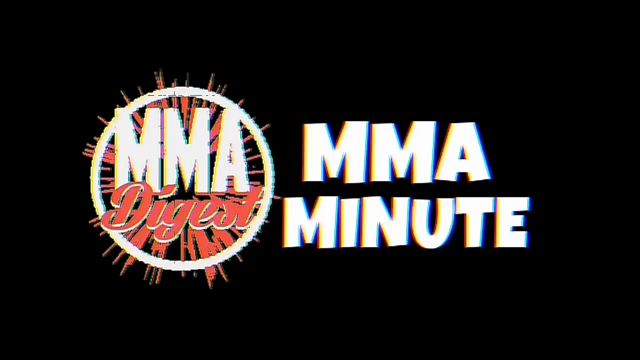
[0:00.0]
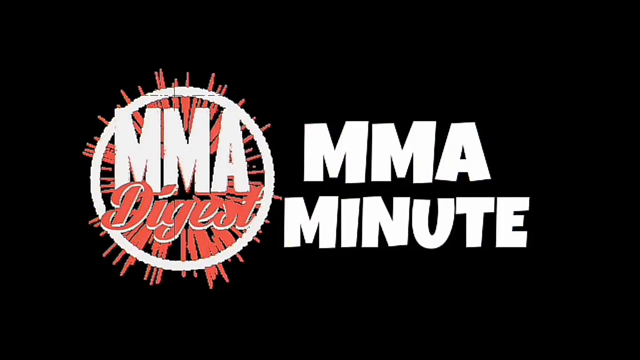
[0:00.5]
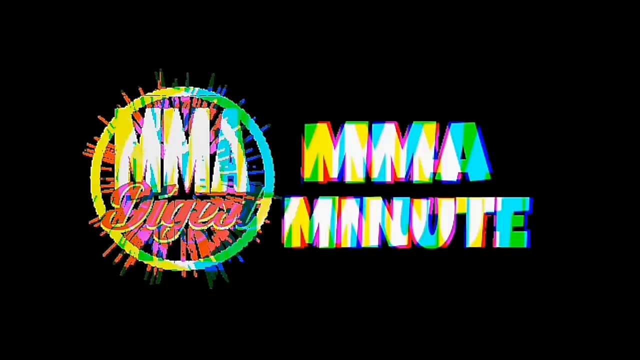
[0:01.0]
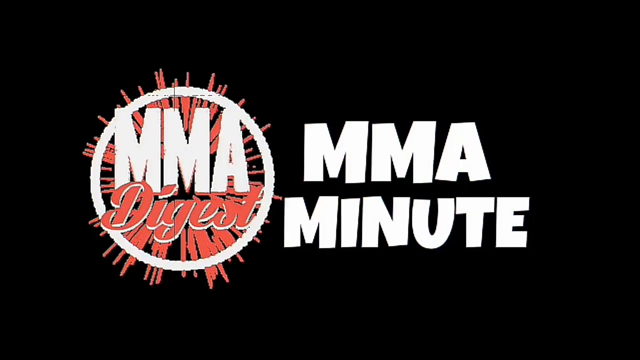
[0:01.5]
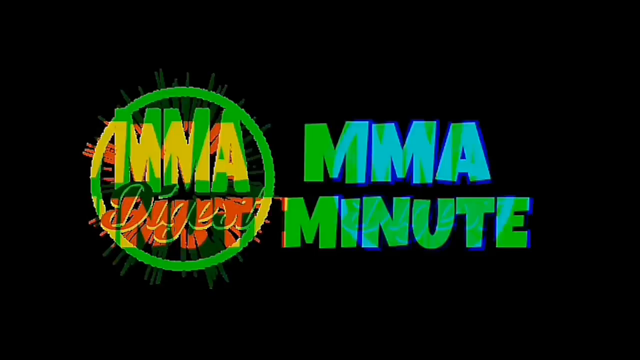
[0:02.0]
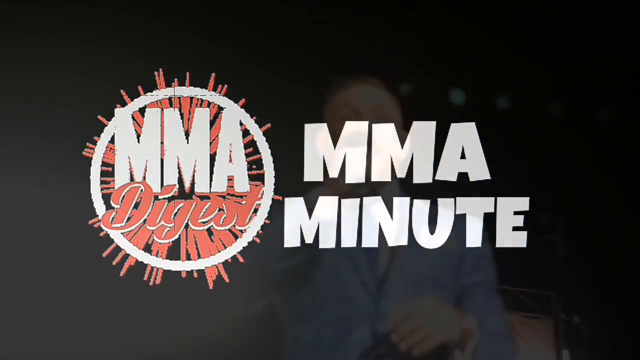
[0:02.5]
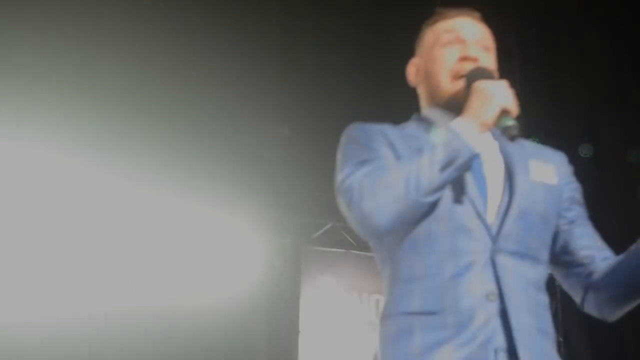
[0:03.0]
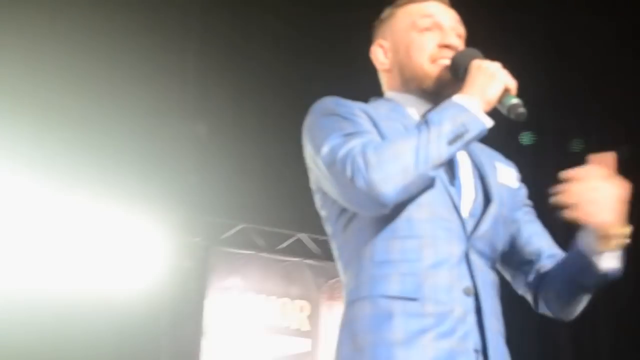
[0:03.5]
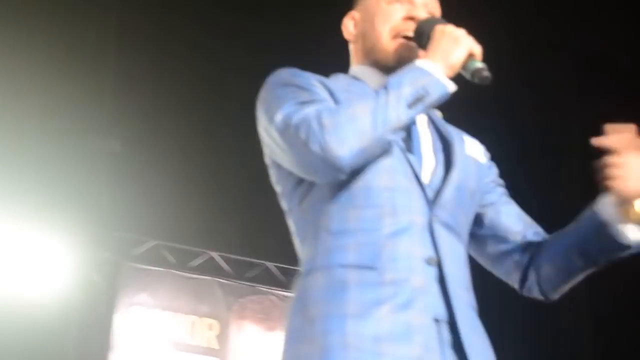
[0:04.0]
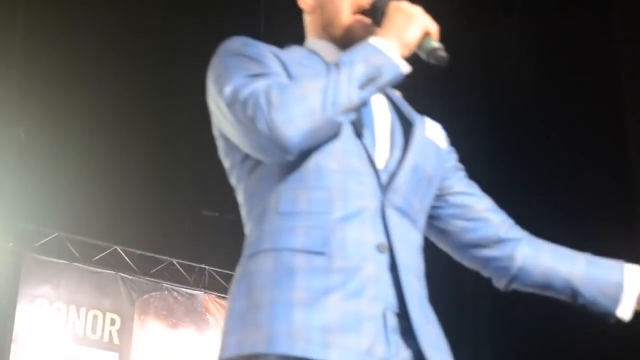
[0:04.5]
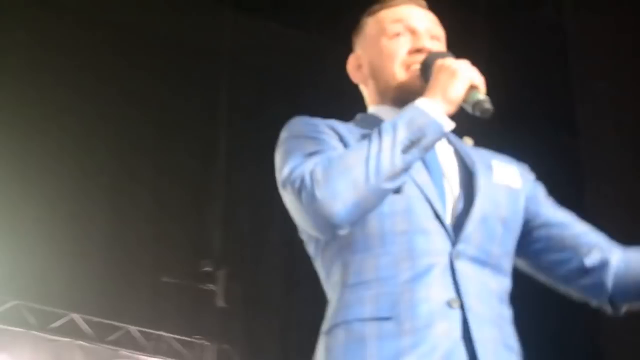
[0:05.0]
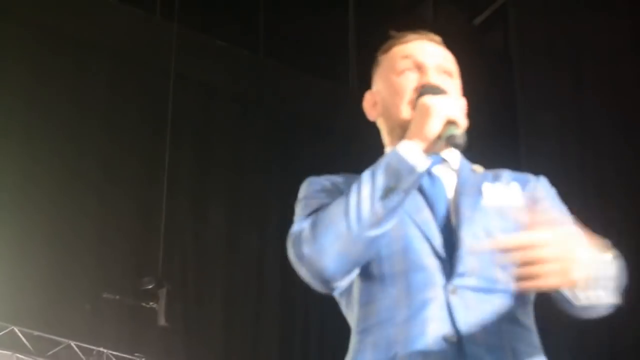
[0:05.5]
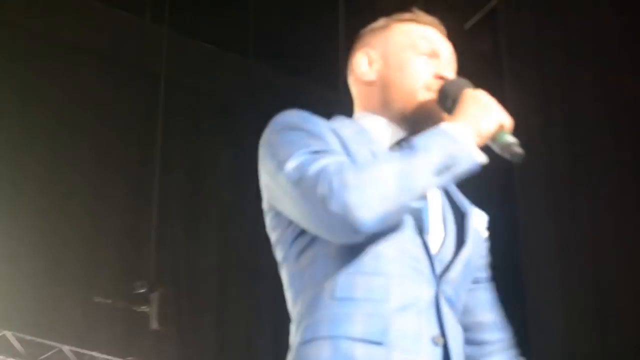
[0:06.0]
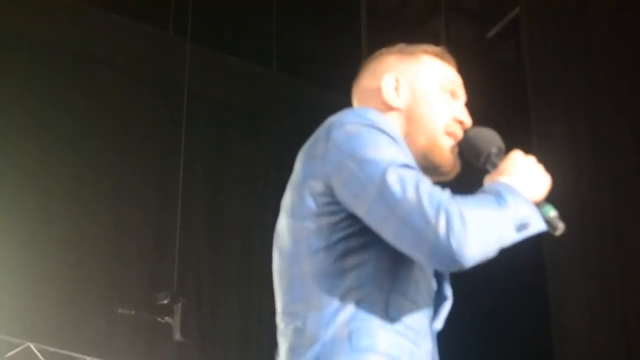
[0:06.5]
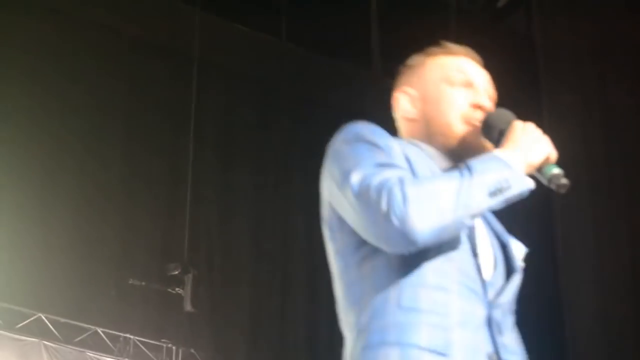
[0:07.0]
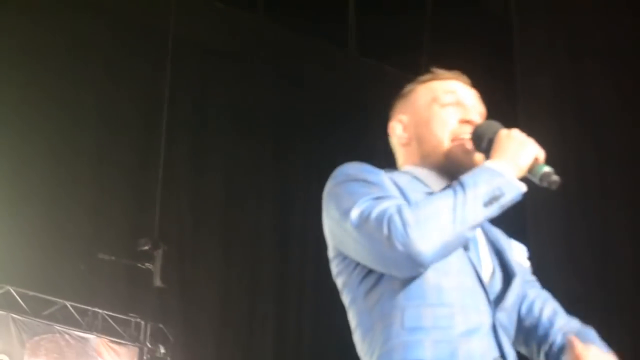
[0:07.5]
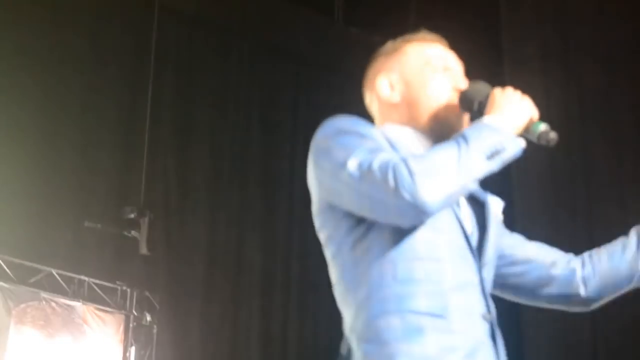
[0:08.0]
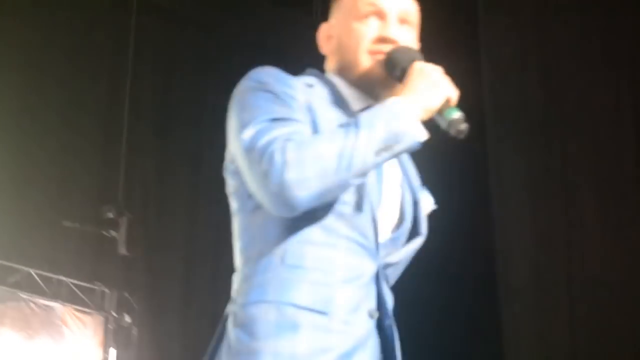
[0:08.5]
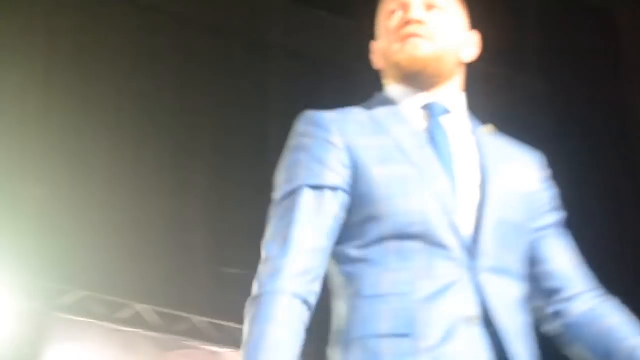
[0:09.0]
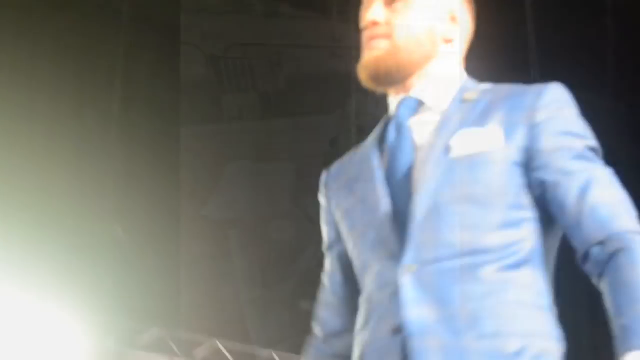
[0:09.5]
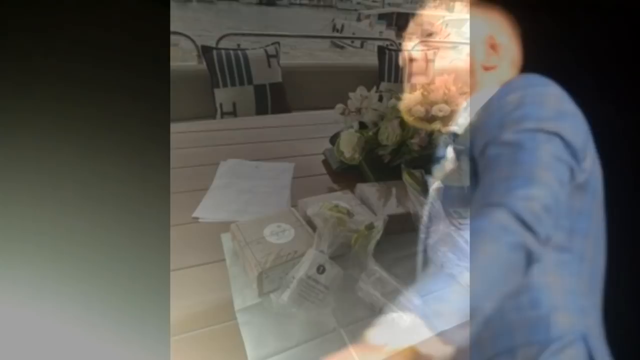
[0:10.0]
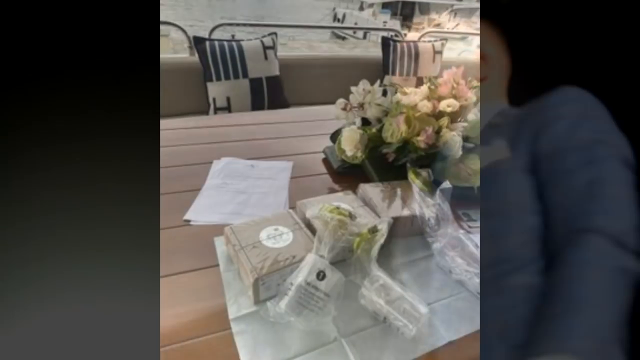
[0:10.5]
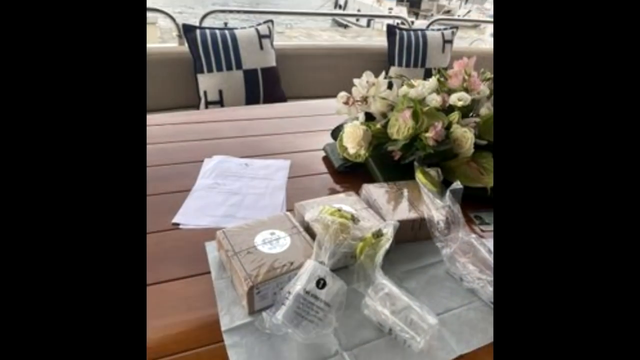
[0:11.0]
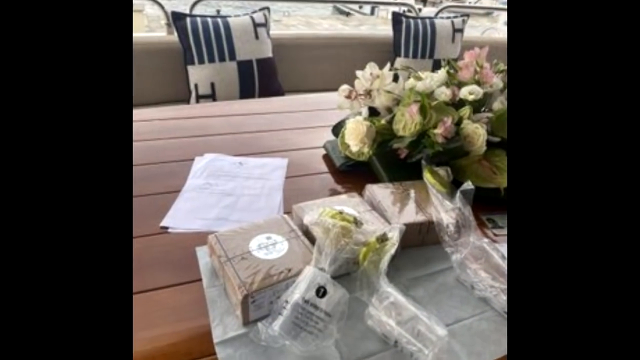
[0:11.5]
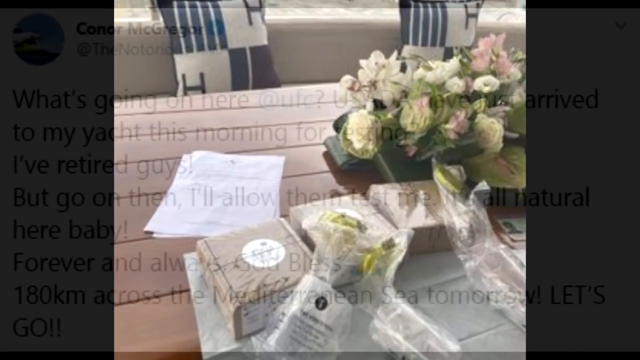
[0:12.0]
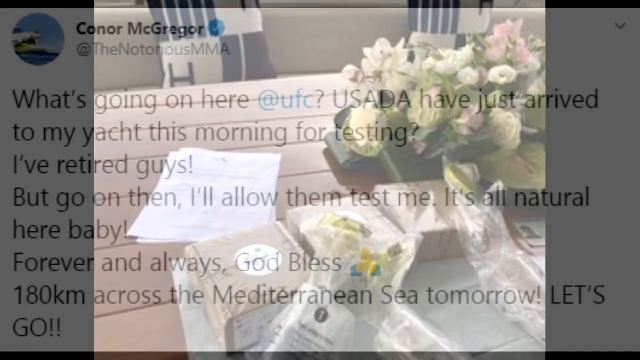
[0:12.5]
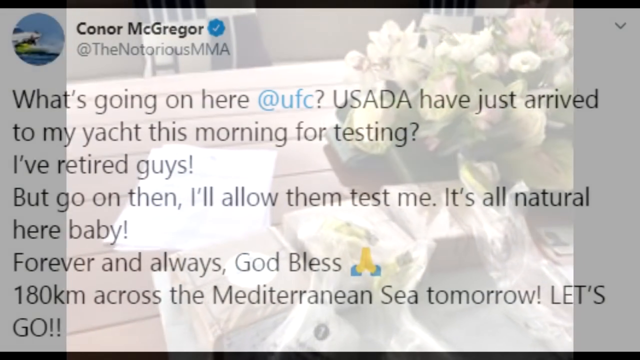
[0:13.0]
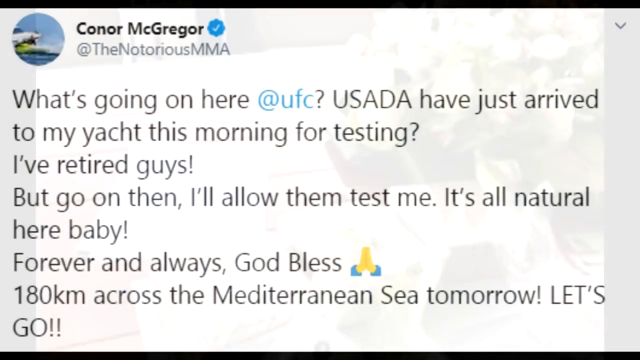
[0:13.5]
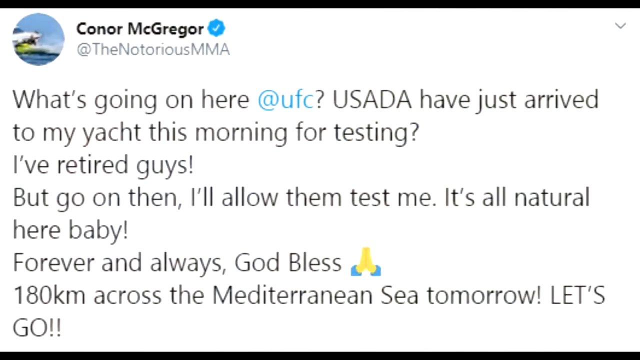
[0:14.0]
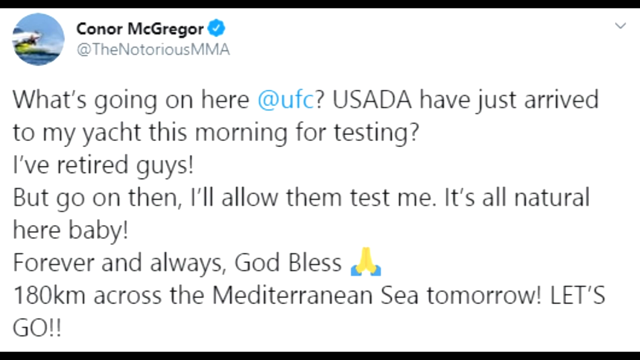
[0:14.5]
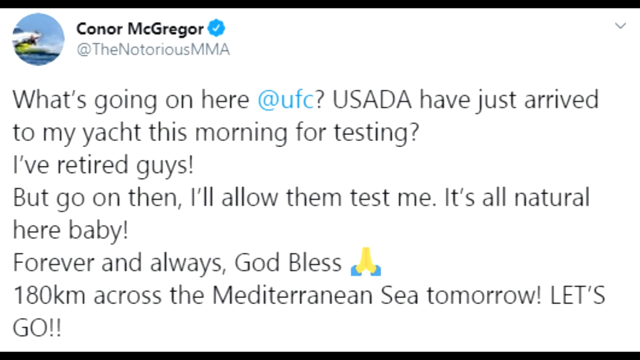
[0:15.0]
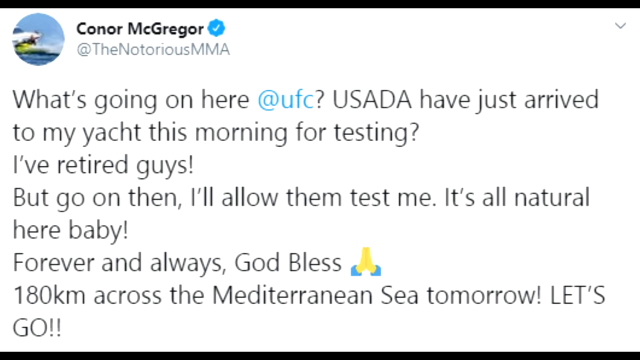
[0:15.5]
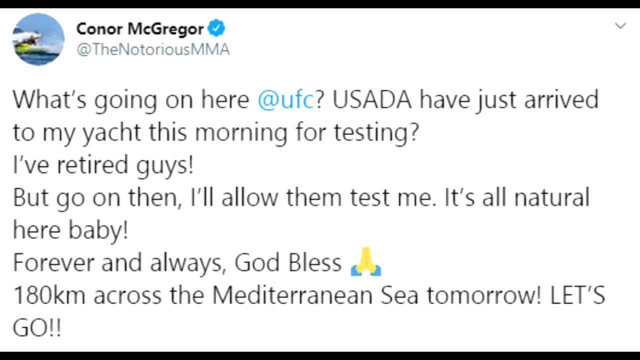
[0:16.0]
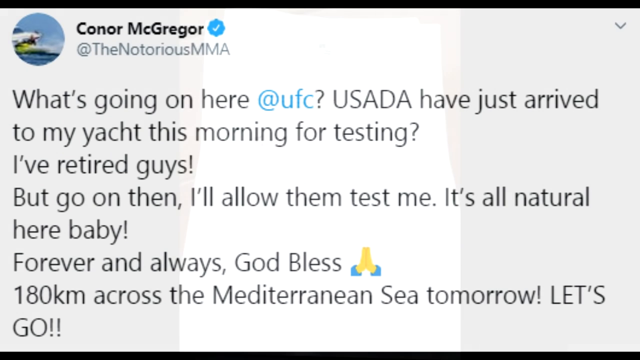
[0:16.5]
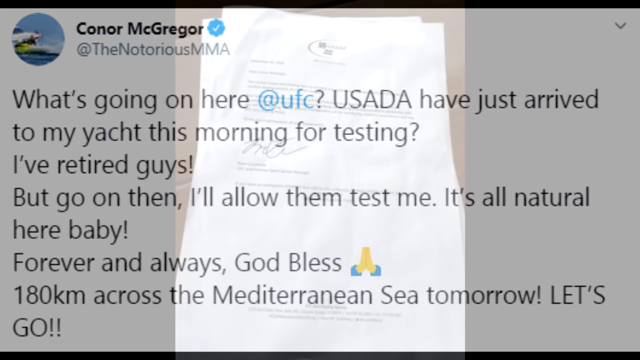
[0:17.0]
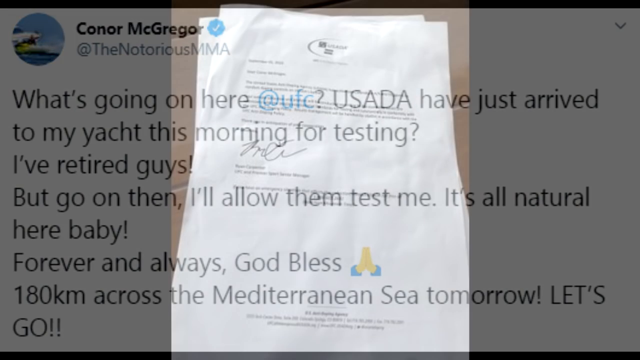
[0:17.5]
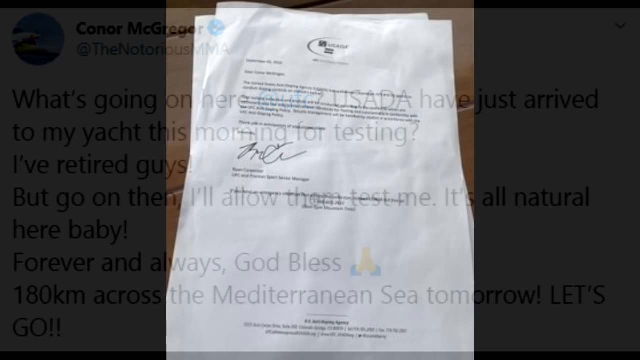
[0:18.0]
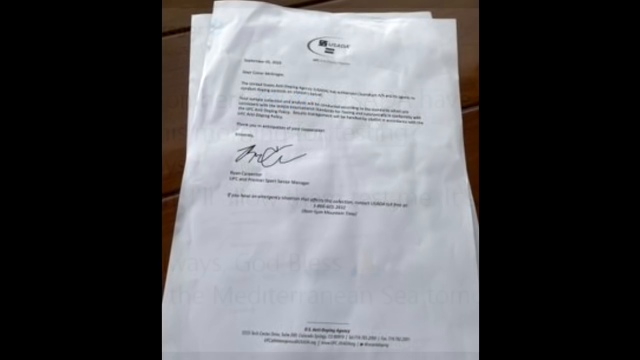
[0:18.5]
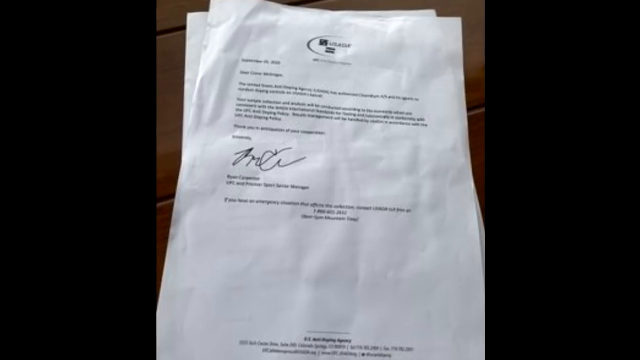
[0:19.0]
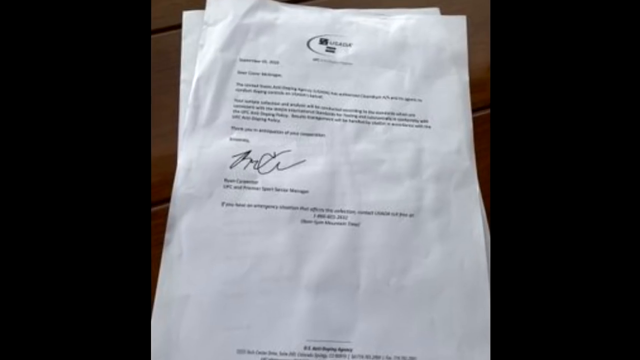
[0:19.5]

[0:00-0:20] The video is wider than it is tall. It opens on an entirely black background with white capital letters spelling "MMA Minute" in the center. To the left are more capital letters reading "MMA," with "Digest" in red cursive below it. Red lines explode out of the background behind these words, and a white circle appears around the two words on the left. The scene changes to what looks like Conor McGregor, being recorded by someone, probably on a phone, with everything around him black. He wears a blue suit with a white dress shirt underneath and a light blue tie, and he talks into a microphone held in his right hand while pacing back and forth vigorously. Next comes a shot of what looks like a picnic table with a bunch of boxes and some flowers on it. Then a Twitter post appears, from Conor McGregor as shown at the top, reading: "What's going on here, UFC? USDA have just arrived to my yacht this morning for testing. I've retired, guys, but go on then. All natural here, baby. Forever and always. God bless."